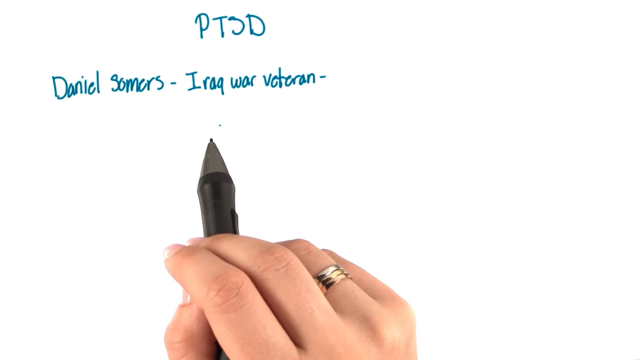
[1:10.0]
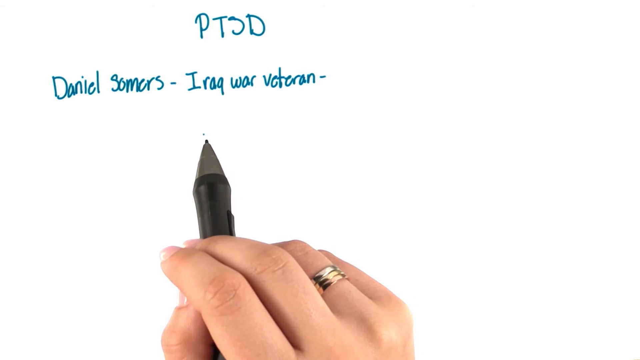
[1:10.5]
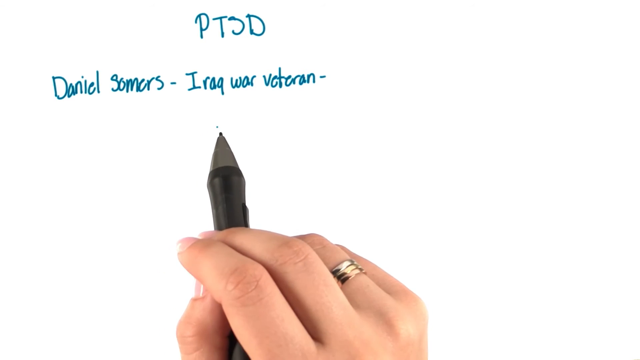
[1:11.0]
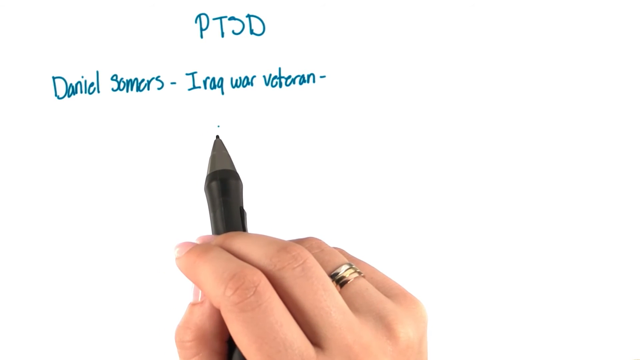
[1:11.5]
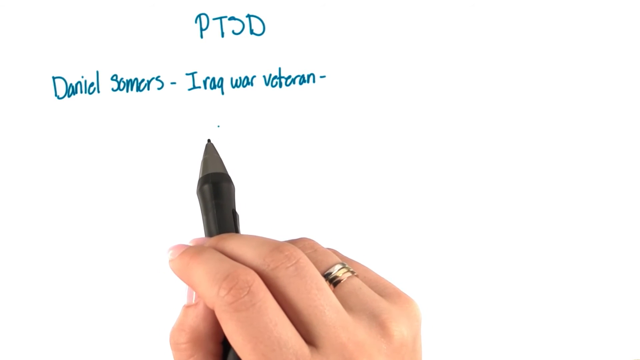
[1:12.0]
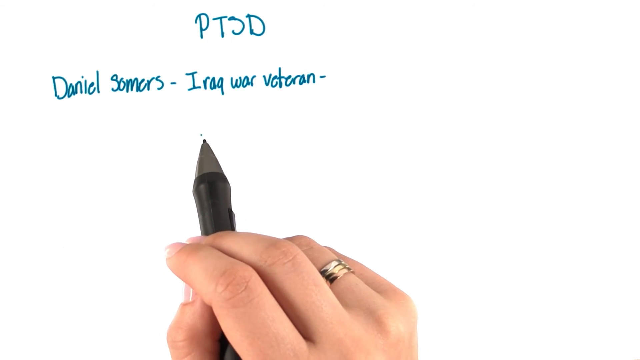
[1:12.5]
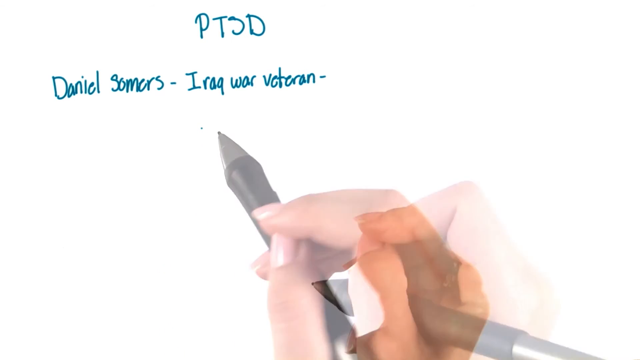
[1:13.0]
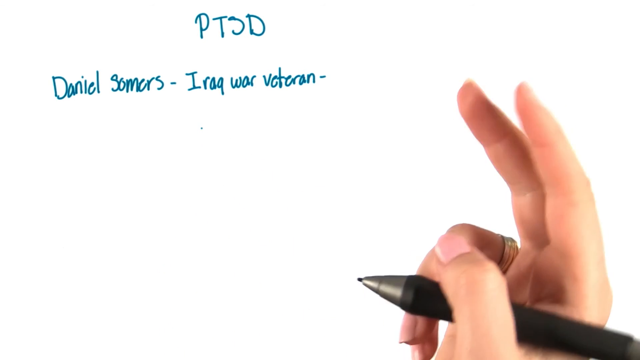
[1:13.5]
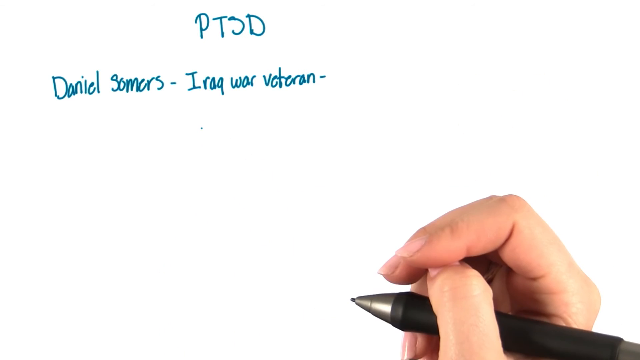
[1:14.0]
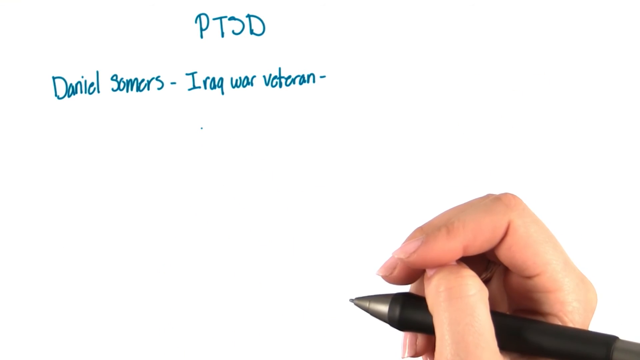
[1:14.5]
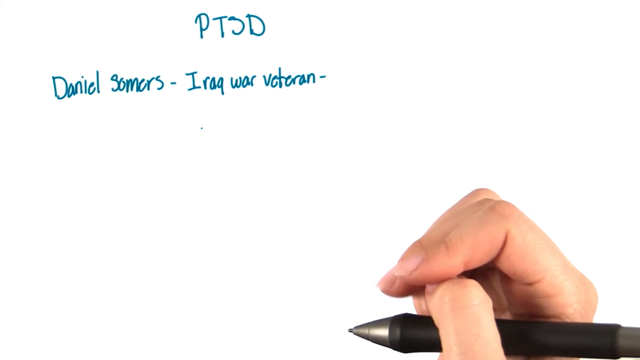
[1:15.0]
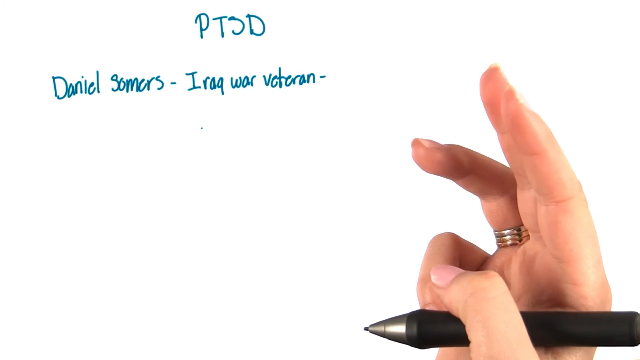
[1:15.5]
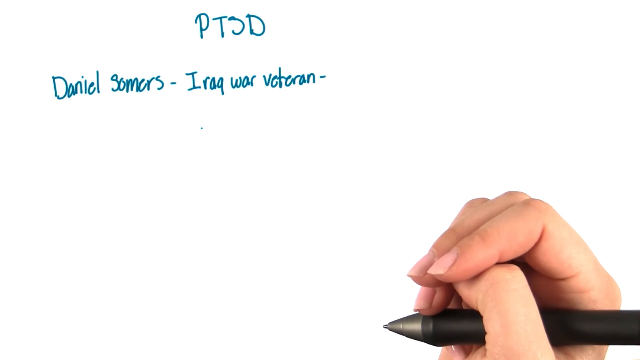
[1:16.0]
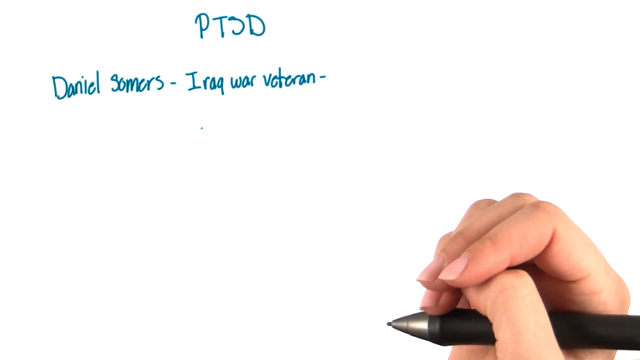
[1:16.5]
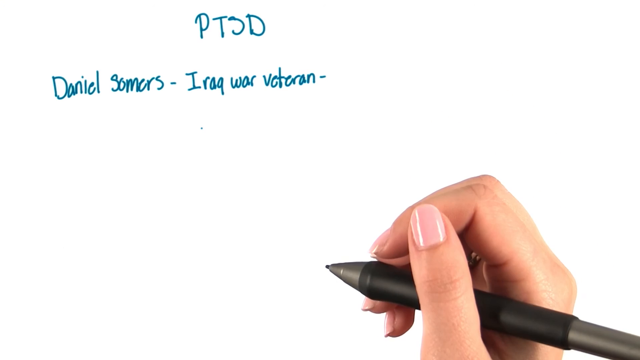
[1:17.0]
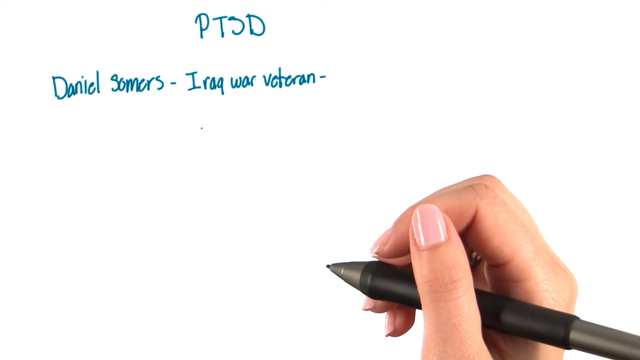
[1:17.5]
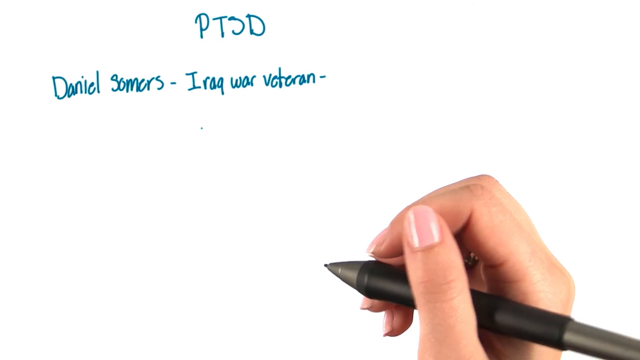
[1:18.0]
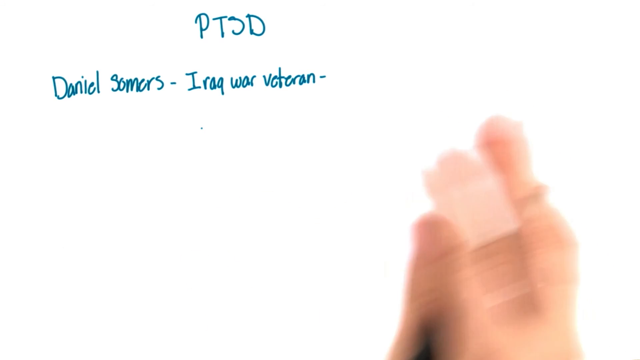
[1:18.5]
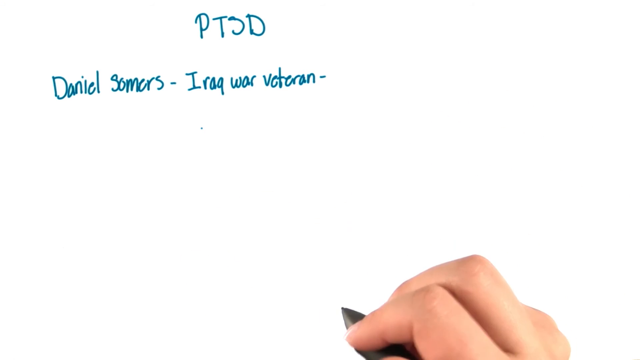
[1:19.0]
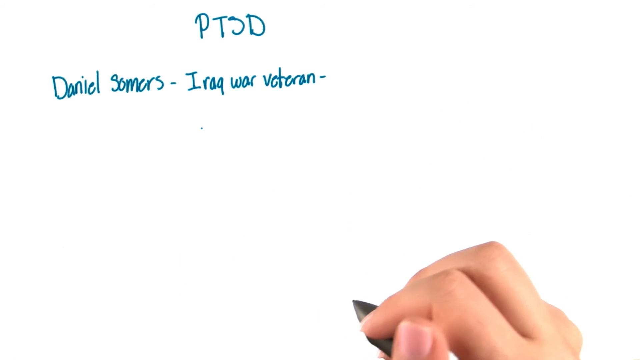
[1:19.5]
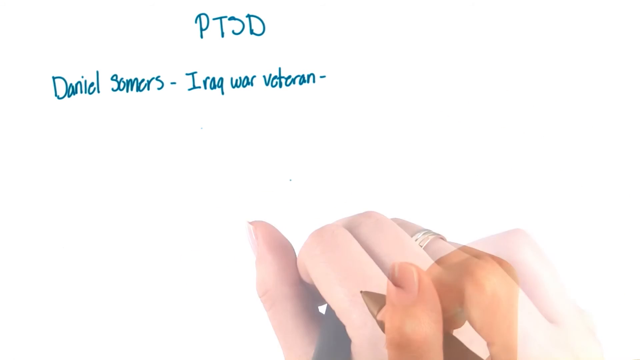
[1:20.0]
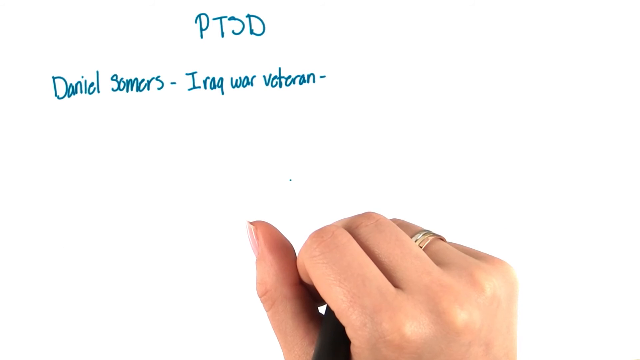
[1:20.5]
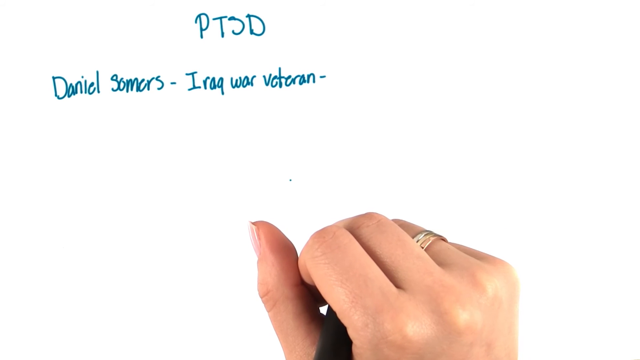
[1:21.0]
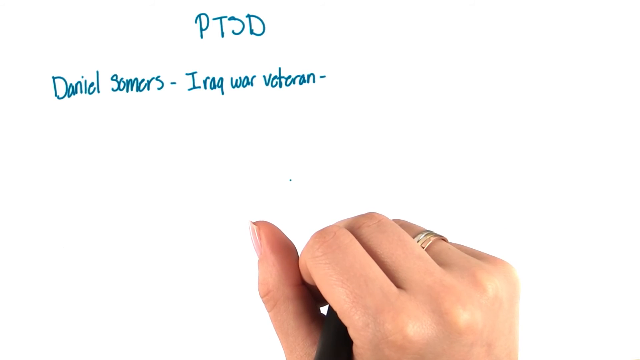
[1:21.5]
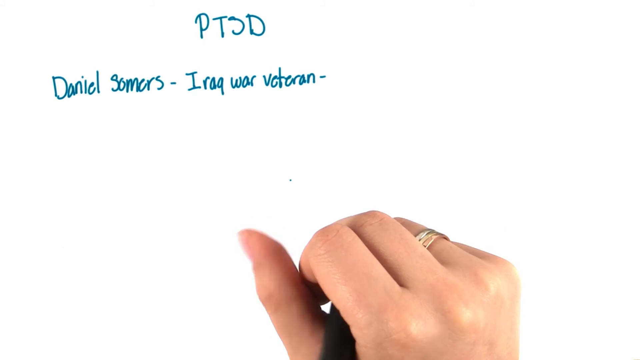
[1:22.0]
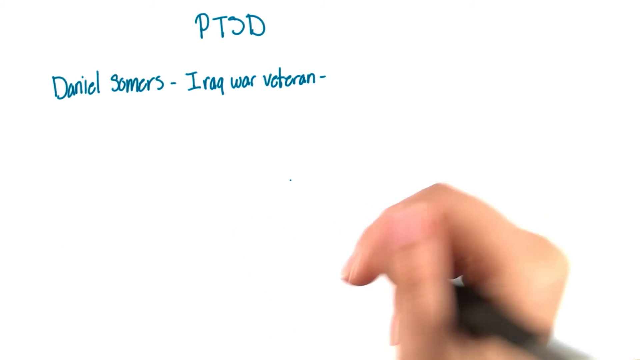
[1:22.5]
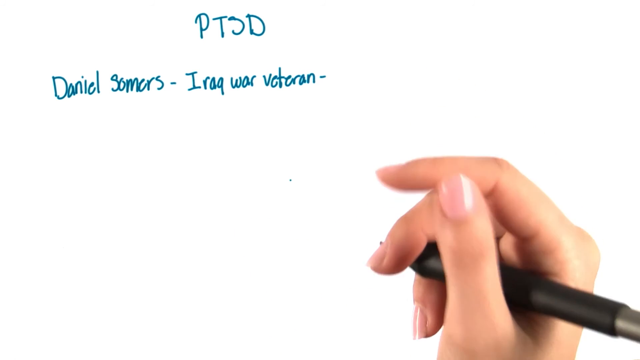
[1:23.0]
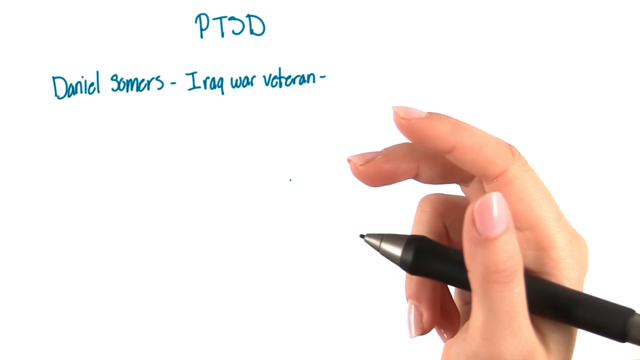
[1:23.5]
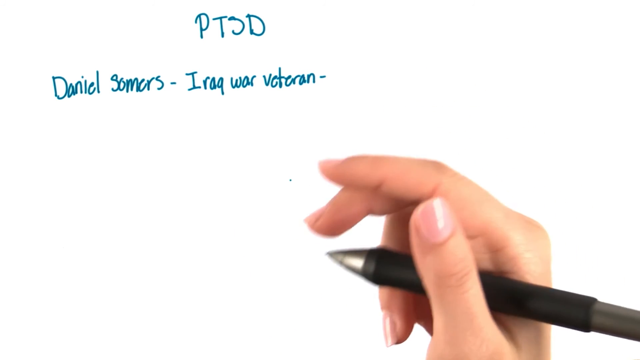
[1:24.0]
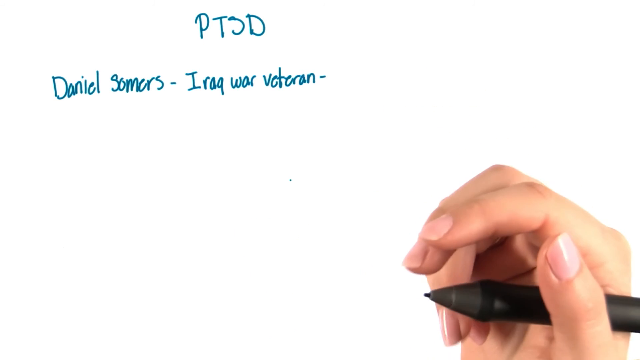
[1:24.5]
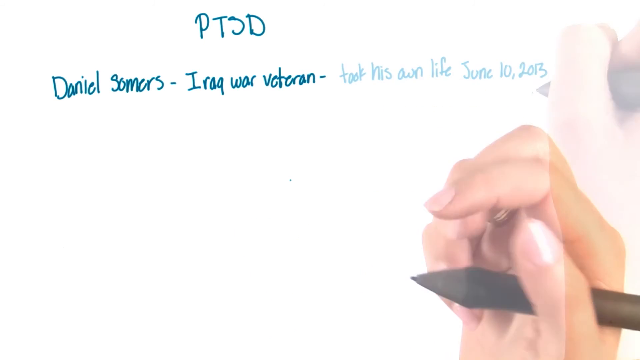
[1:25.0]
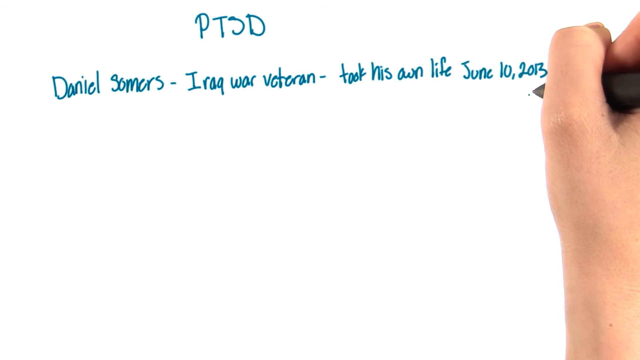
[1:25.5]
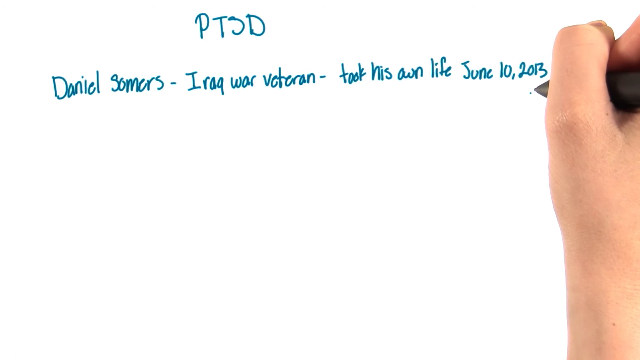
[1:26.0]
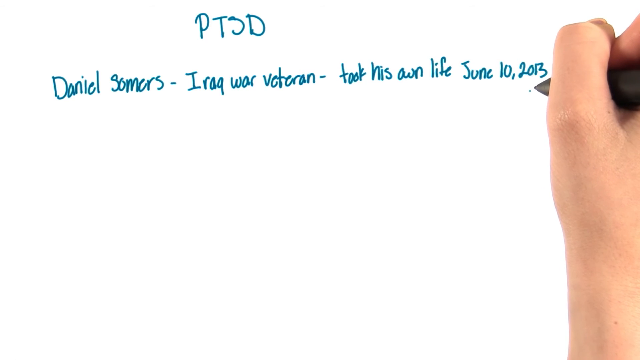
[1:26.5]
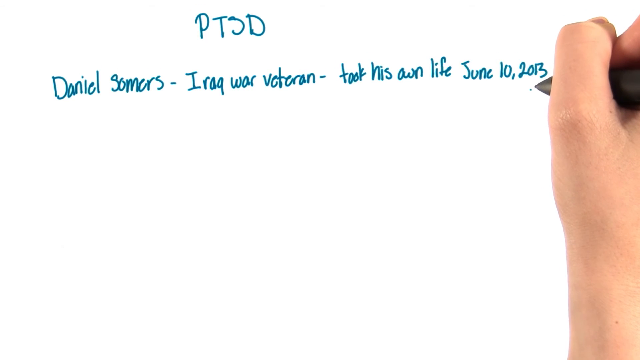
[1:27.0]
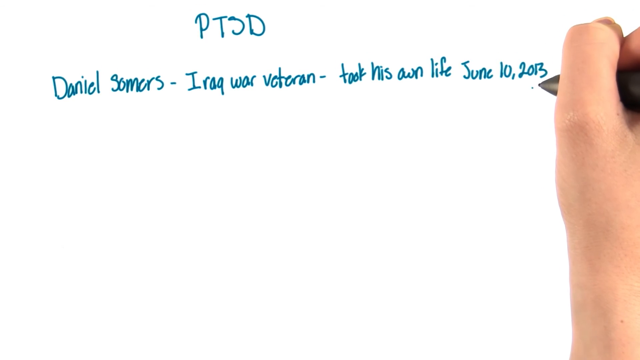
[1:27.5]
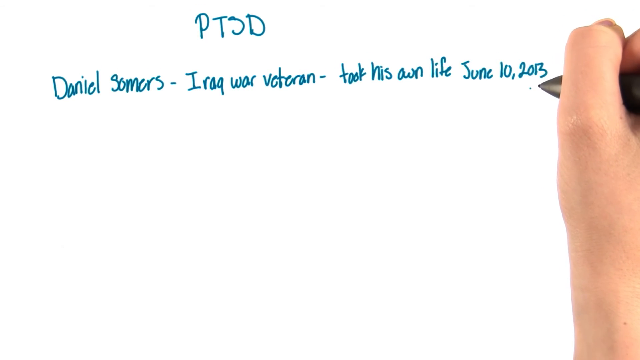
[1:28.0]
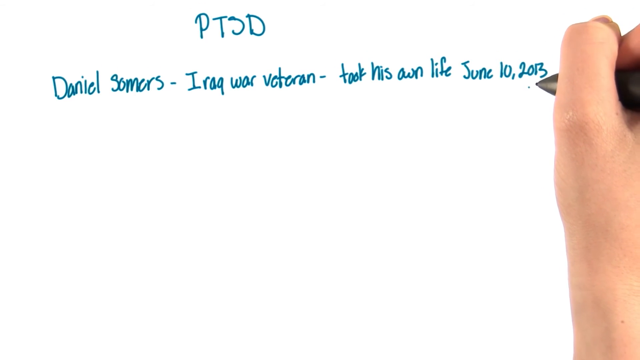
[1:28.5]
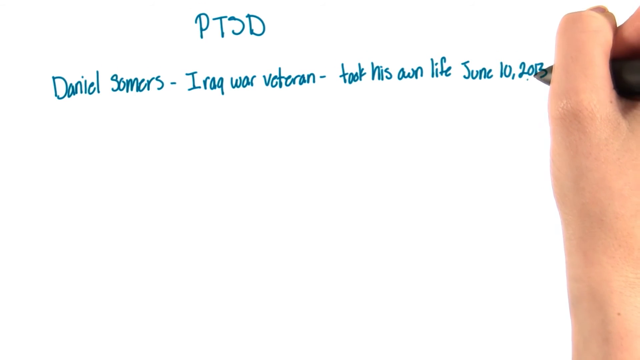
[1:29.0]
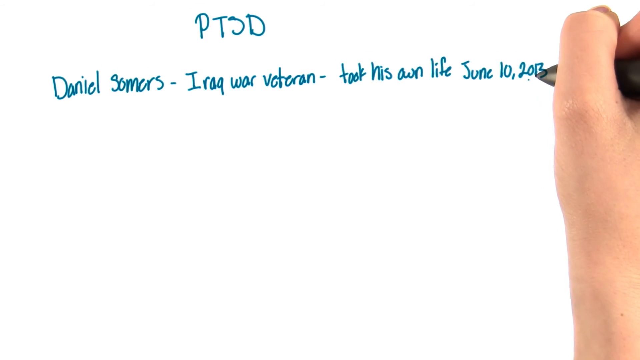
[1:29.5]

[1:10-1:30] The hand is at the bottom, visible from the knuckles up, showing most of the ring finger and pointer finger, which kind of curve down as they go up and are just to the left of the black grip. The thumb comes from under the pointer finger, with a little of its fingernail and then just its top joint visible. Half of the ring finger is visible, wearing a gold band with three sections across, along with a little of the pinky finger and the knuckles. The pen sticks up, with its black grip and silver around the tip. Across the top of the white background, in big, bold, blue capital letters slightly shifted left of center, is "PTSD," and near the left side, about an inch in, the blue text reads "Daniel Somers - Iraq war veteran -". The pen is kind of pointing. The hand moves to the bottom right corner with the thumb toward the camera, showing the side of the pointer finger and a little of the middle finger, the pen tip pointing left and the back of the pen going off the right side. The hand puts up two fingers, brings them down, then puts up three fingers, with the thumb underneath the pointer and middle fingers when the fingers come down. The hand then kind of relaxes and waves over toward the right, showing the back of the fingers and the knuckles, turns over, puts up one finger, then two fingers again. Then, next to the dash at the top, it writes "took his own life, June 10th, 2013," with the hand halfway off the right side as it does so.